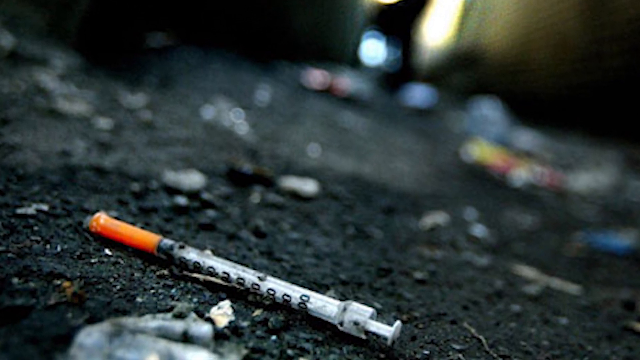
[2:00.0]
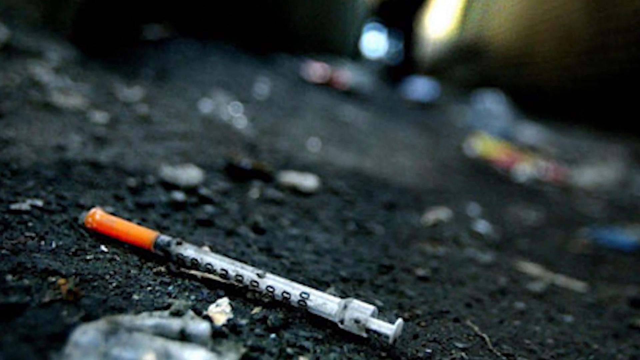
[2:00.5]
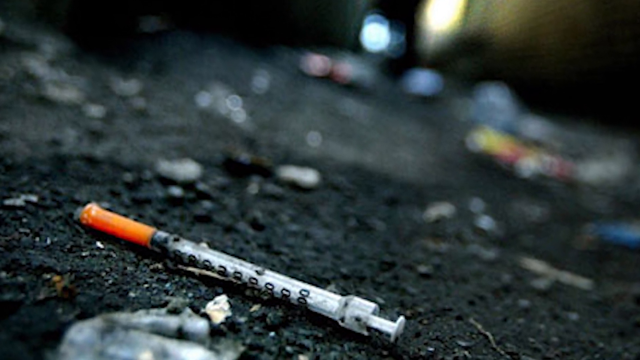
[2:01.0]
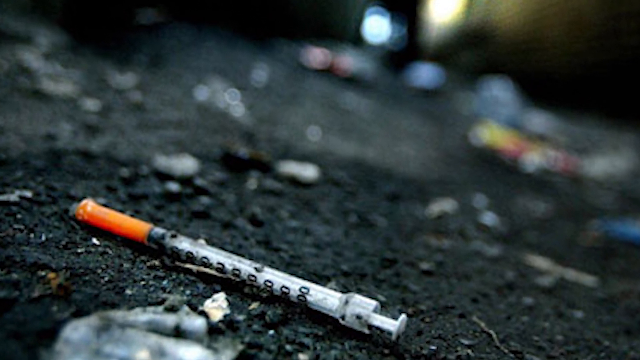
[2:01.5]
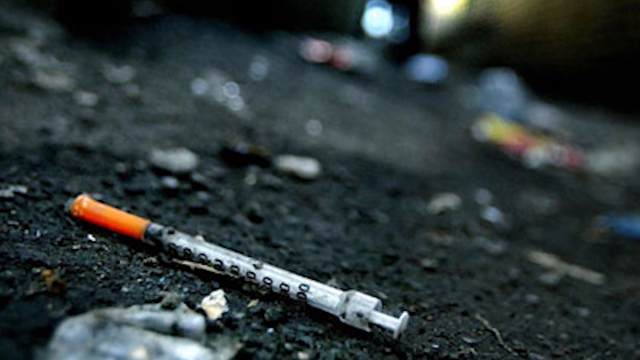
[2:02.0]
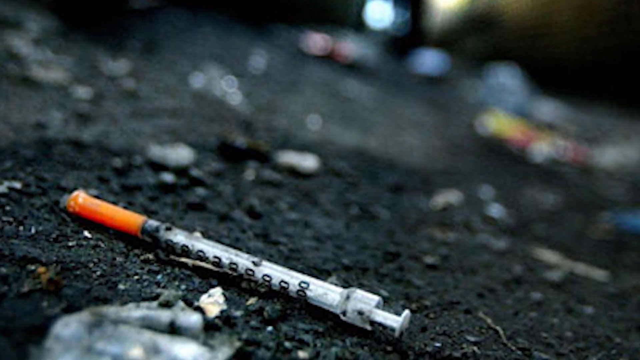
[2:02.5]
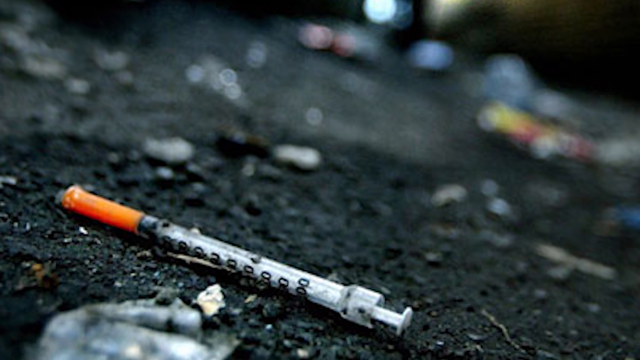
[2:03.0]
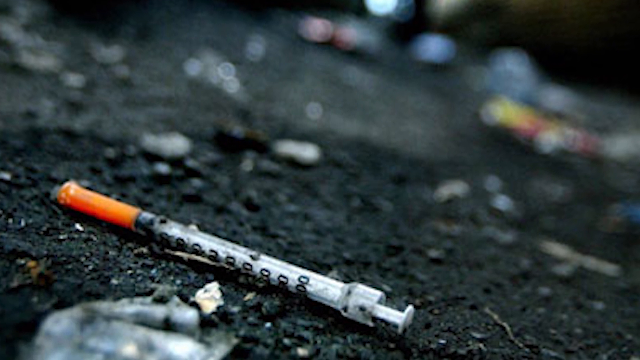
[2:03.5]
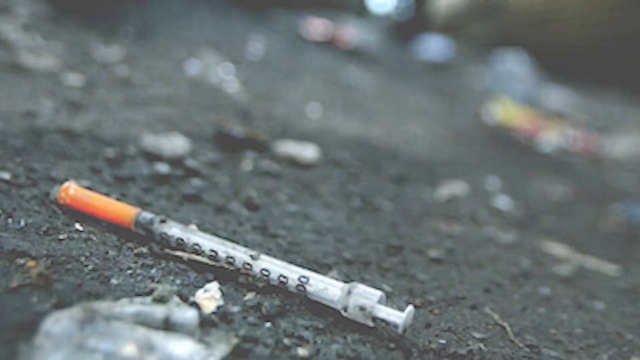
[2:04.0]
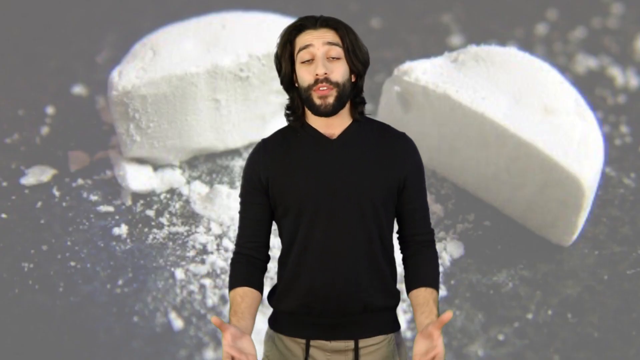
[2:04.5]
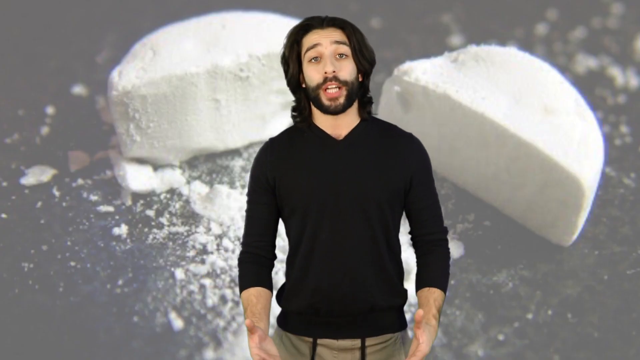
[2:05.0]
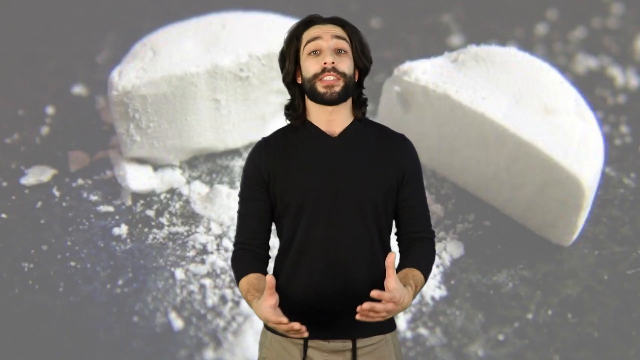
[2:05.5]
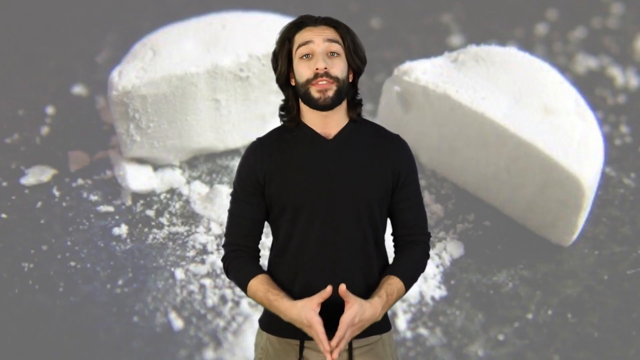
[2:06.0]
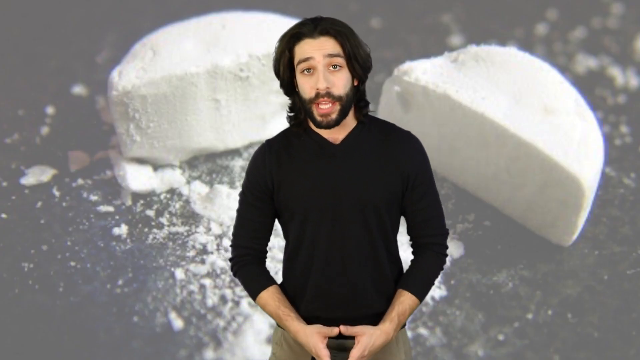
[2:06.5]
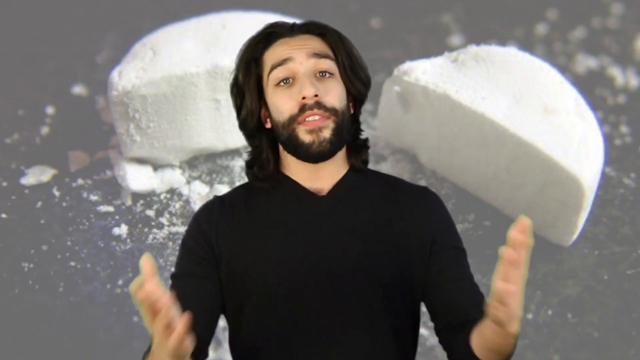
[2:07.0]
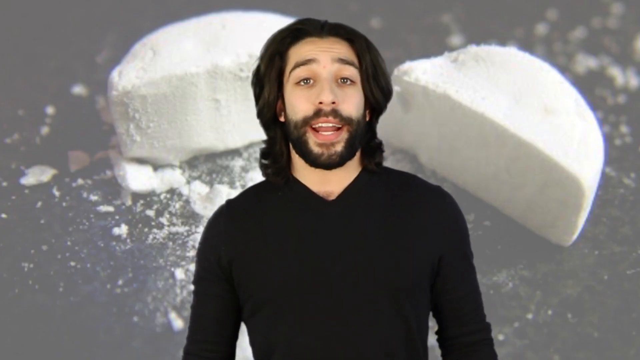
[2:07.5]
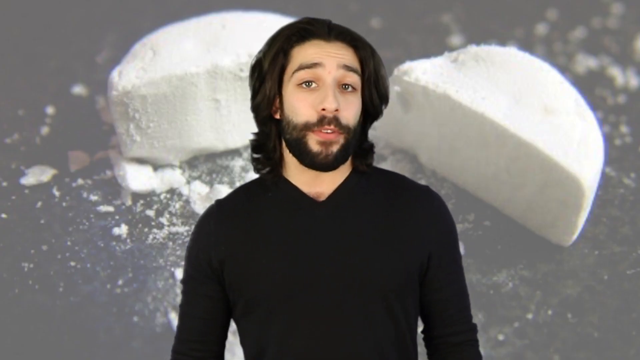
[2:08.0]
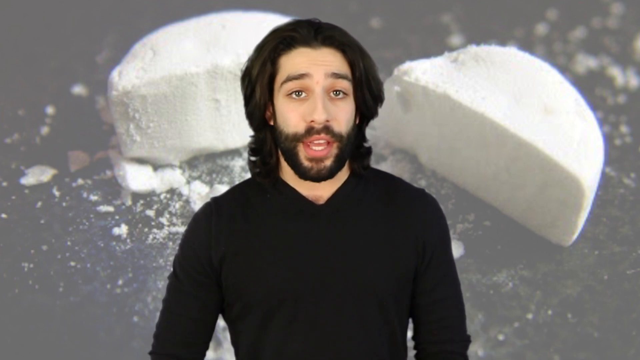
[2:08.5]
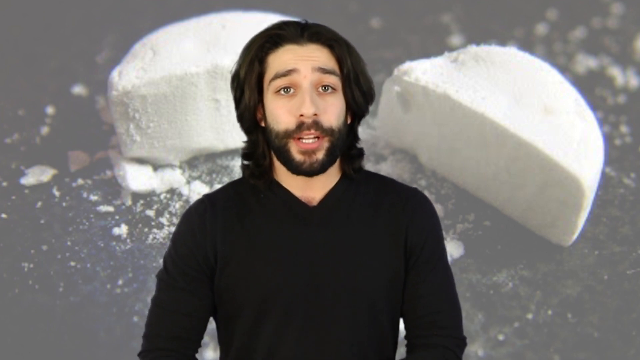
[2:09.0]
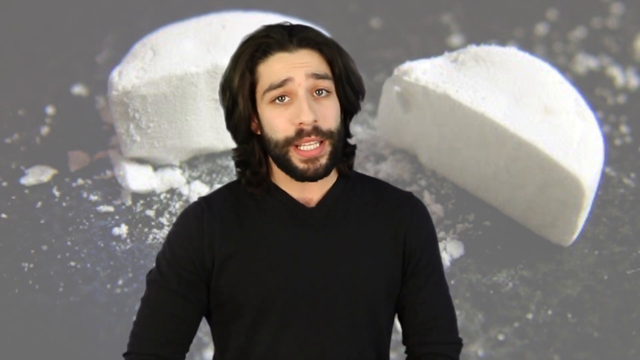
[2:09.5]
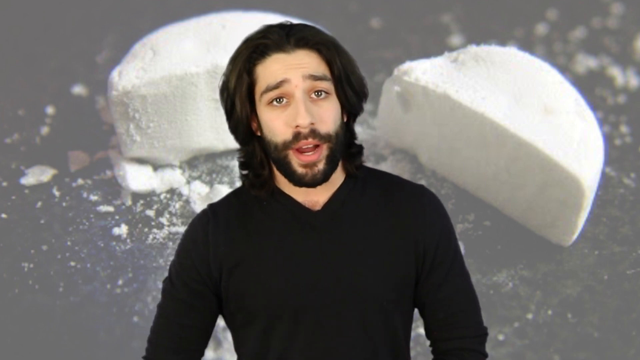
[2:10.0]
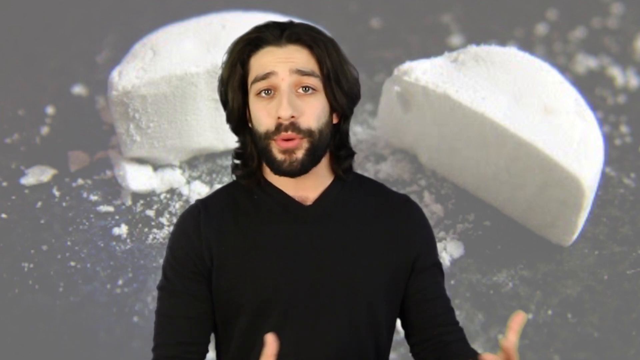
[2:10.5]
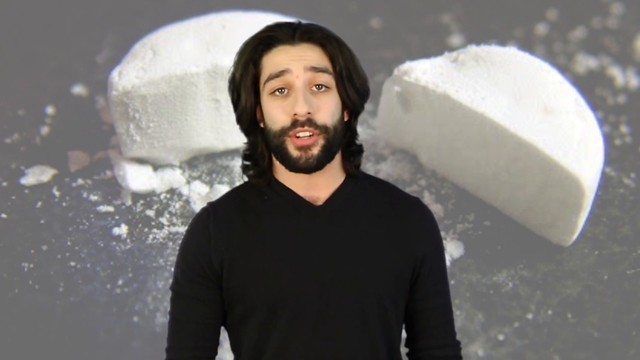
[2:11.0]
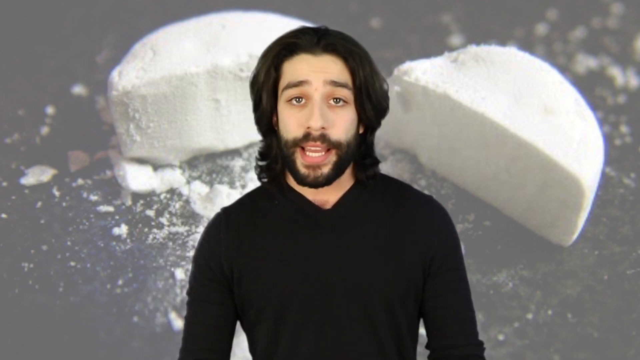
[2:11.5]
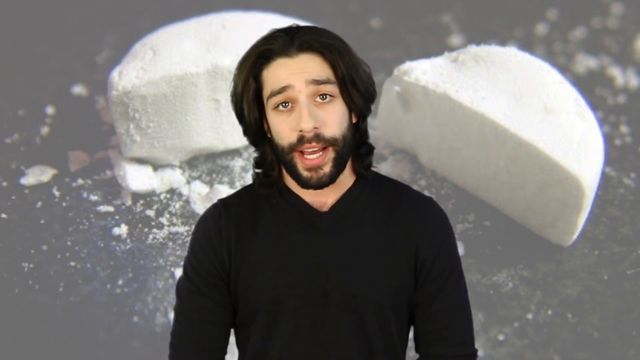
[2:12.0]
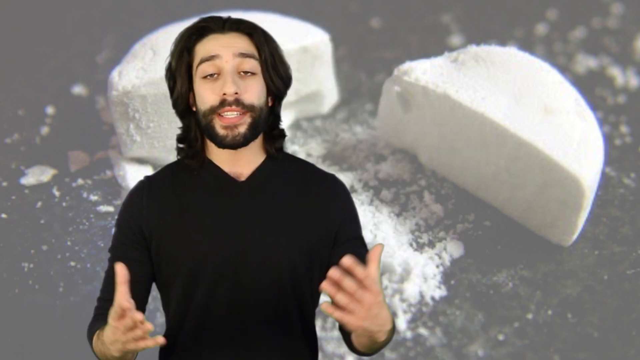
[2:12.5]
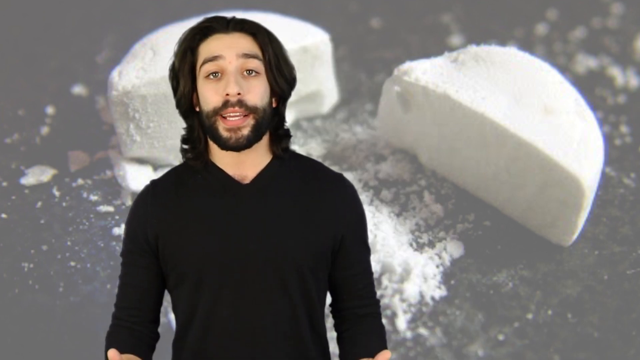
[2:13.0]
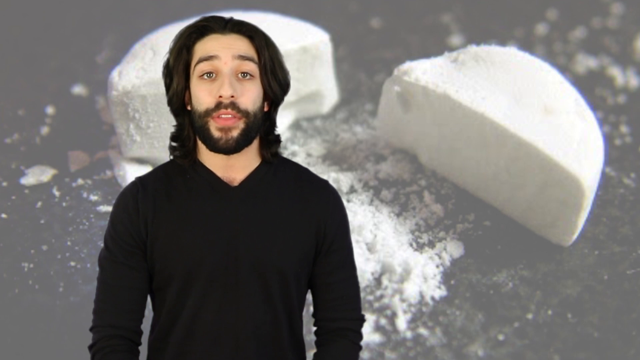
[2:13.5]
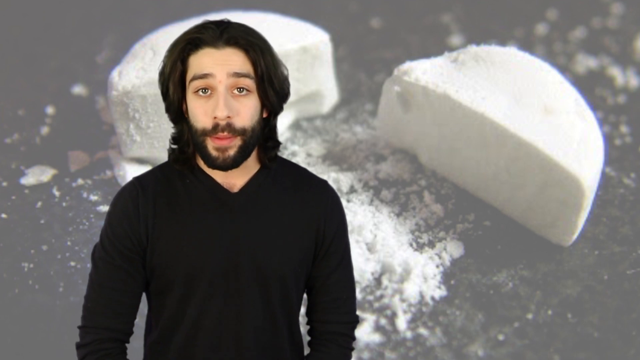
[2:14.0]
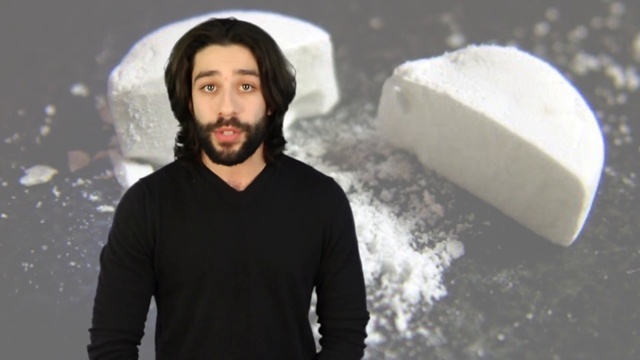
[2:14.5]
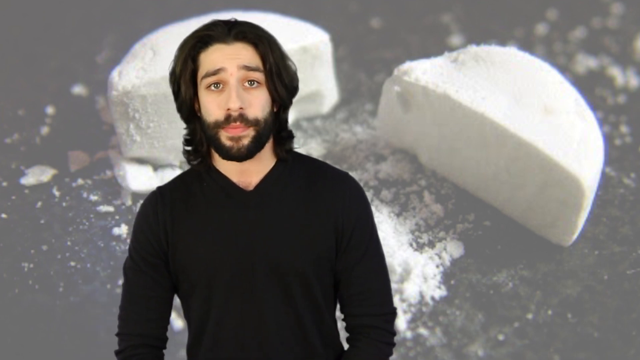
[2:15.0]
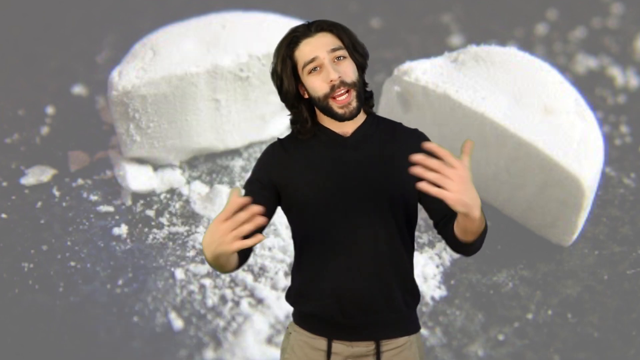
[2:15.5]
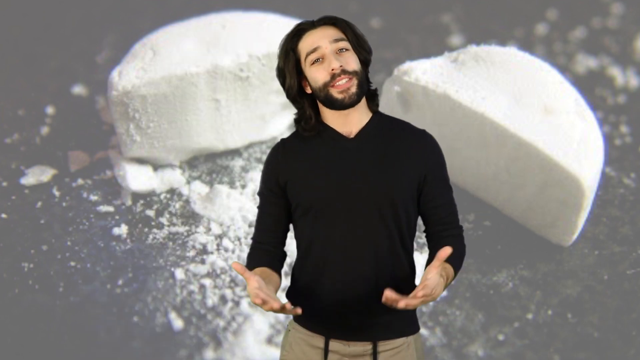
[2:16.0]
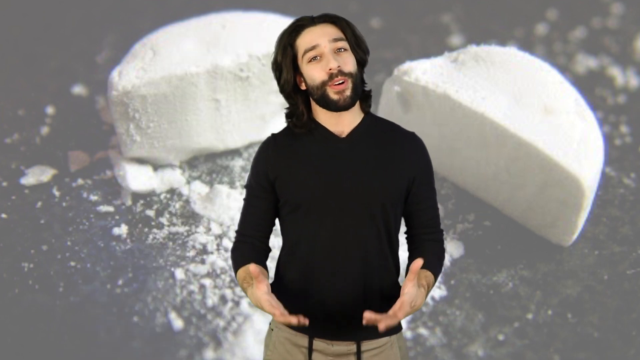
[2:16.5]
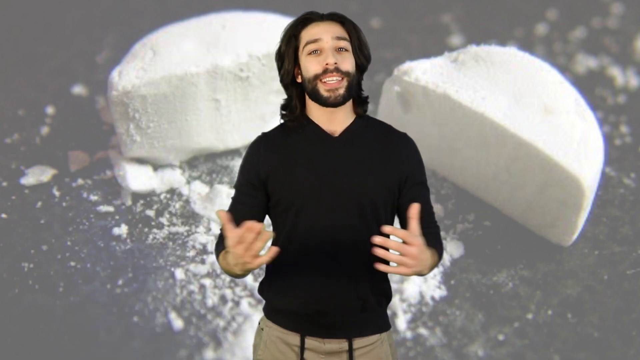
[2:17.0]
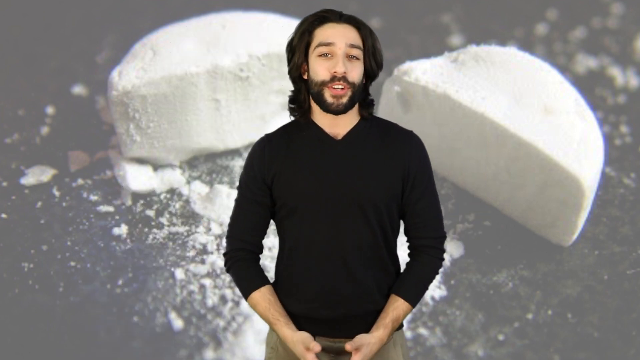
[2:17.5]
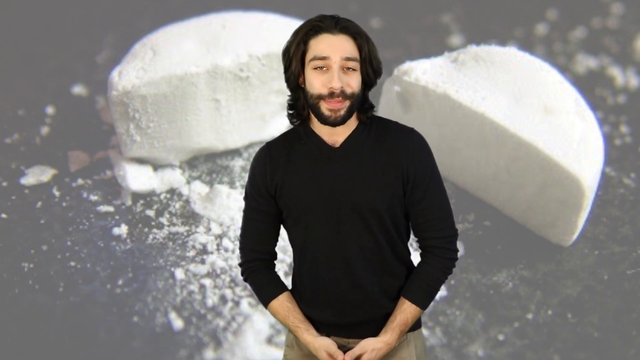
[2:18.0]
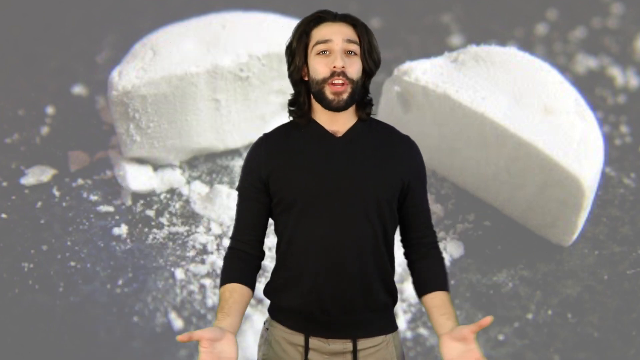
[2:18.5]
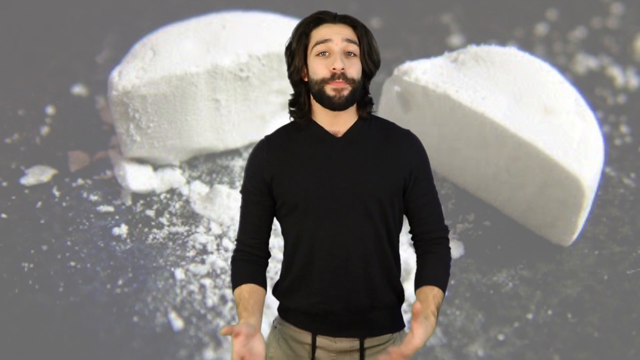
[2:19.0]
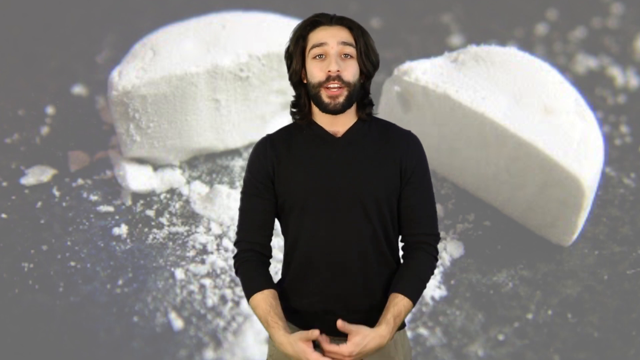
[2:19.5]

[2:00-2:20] The syringe has an orange cap over it, and its plastic container shows numbers and measurement values. It is on the ground next to or in front of other items that look like scattered garbage, in what looks like an unclean environment, apparently left on the ground by somebody.